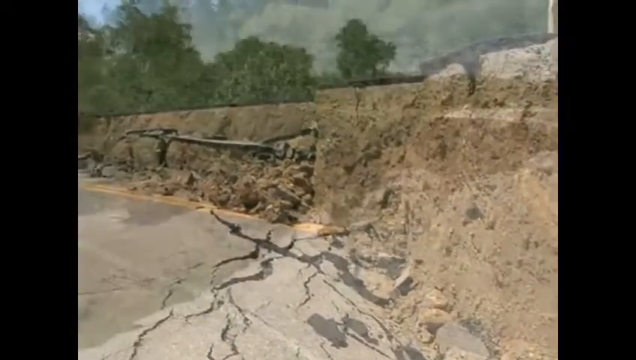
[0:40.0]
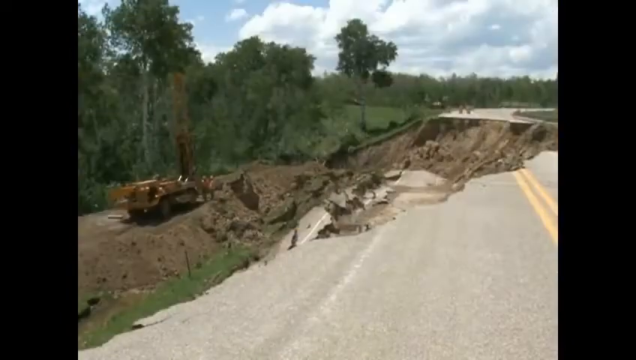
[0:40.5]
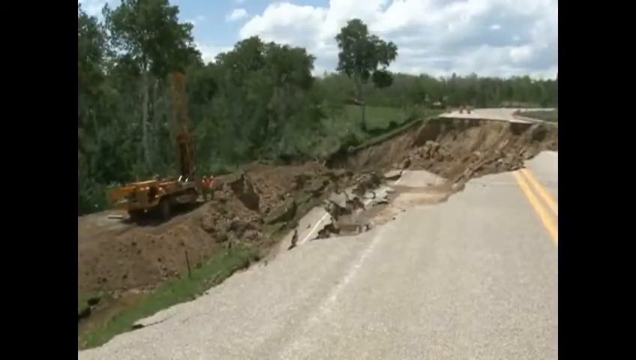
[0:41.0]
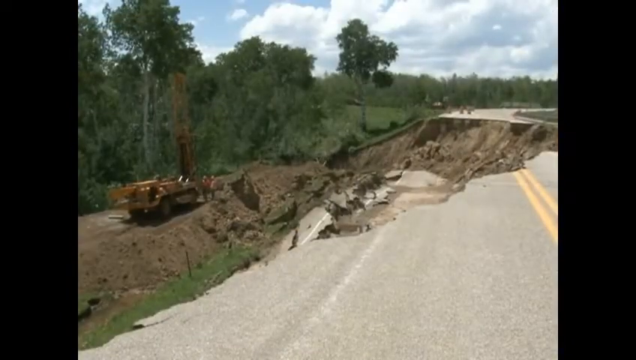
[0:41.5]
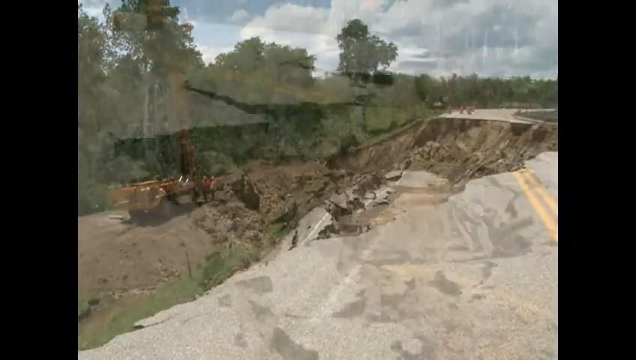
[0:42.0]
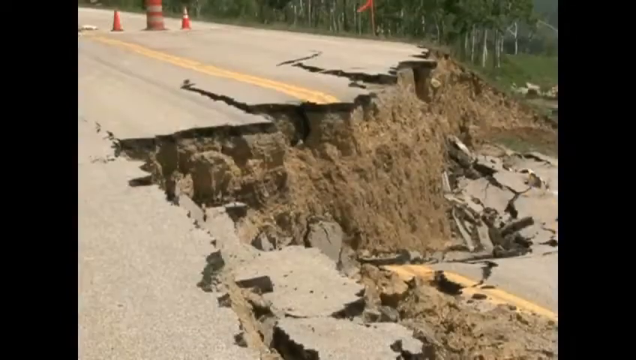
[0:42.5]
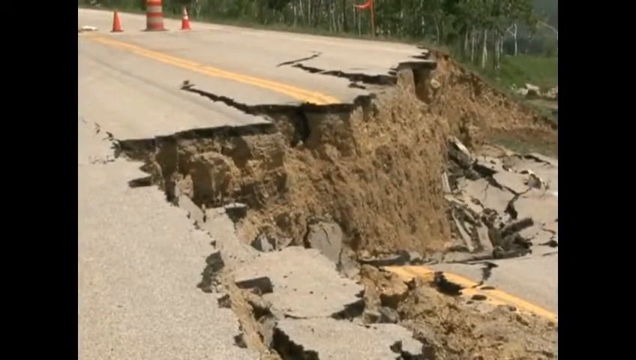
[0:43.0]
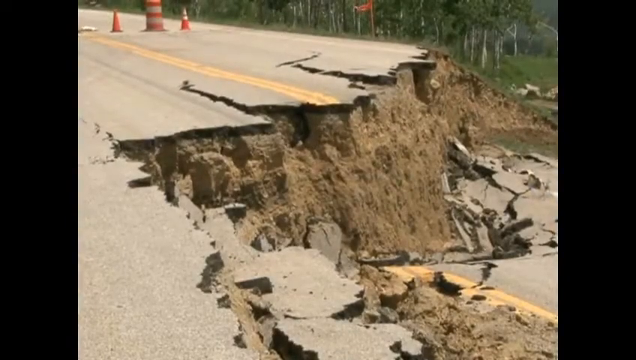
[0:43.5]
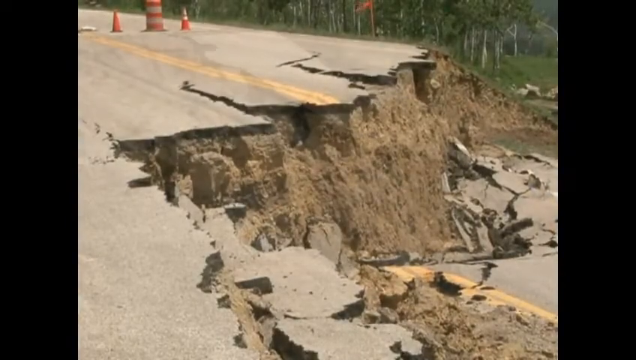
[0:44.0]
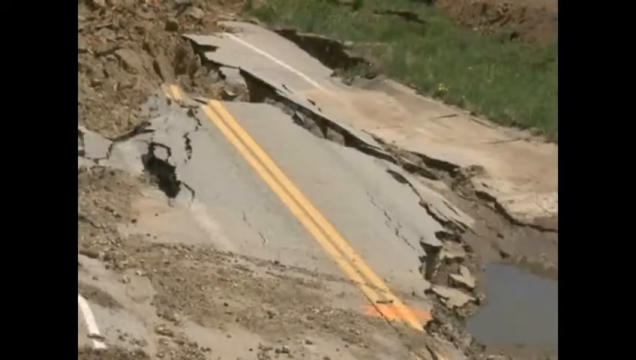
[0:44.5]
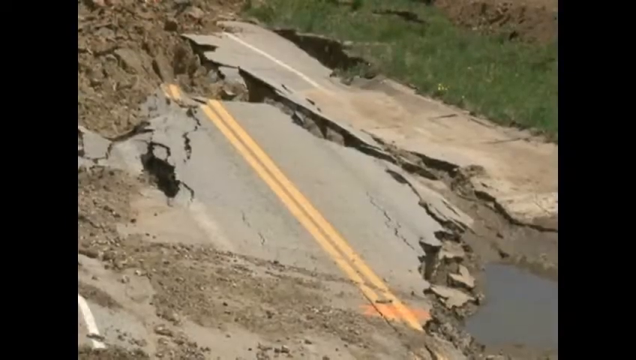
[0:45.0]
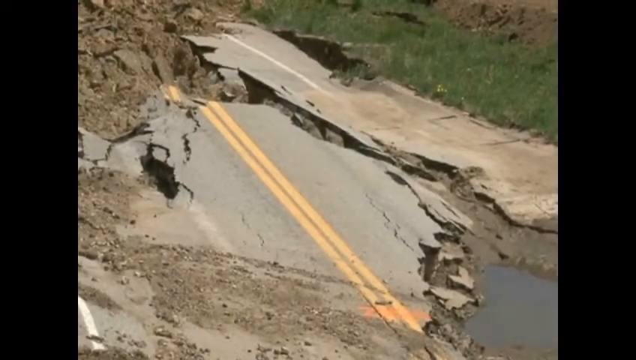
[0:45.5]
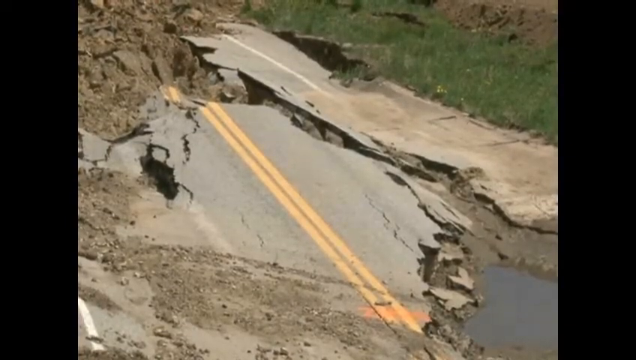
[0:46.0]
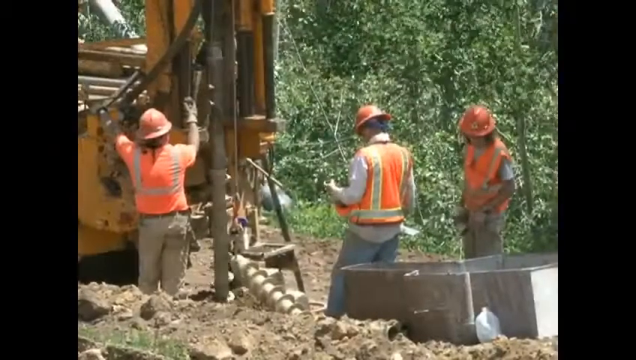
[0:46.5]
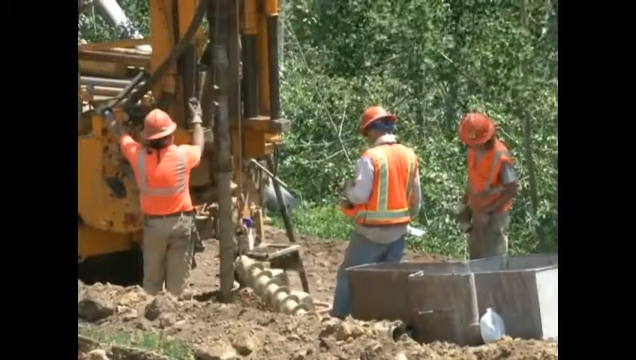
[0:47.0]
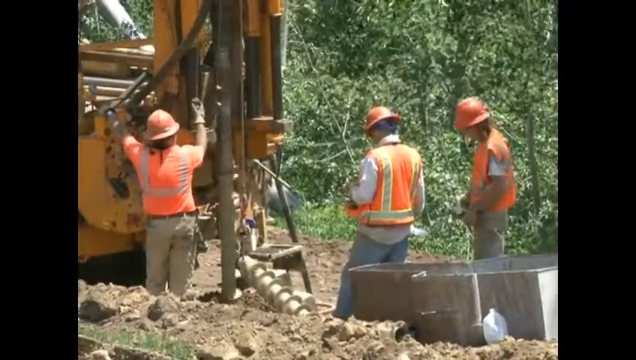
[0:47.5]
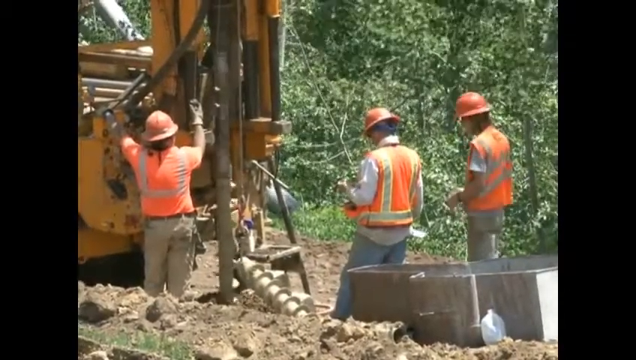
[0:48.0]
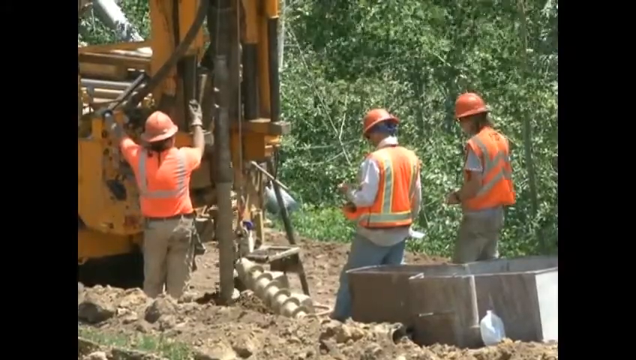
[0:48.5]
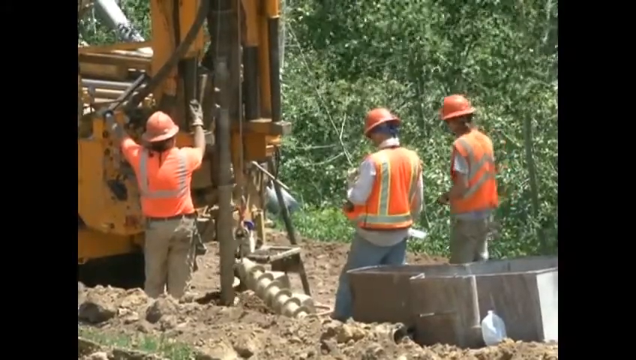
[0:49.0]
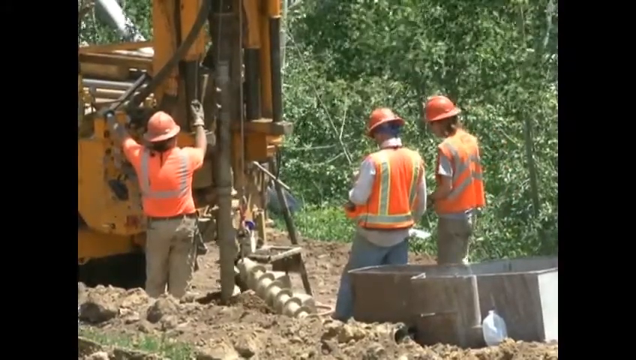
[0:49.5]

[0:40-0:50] A side shot shows the construction of the road, with the dirt visibly packed in very well and possibly some metal or pots in the substrate. Another shot shows the collapse off to the side, with what seems to be a yellow machine down to the left. A shot from more toward the front shows the crack and the erosion, with orange traffic cones on the road and more destruction of the concrete. Then people are operating the machine, which seems to be some sort of drill: three figures, all in orange safety vests and hard hats, are working the drill.